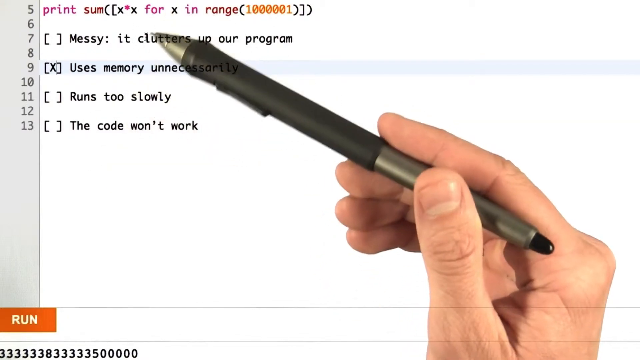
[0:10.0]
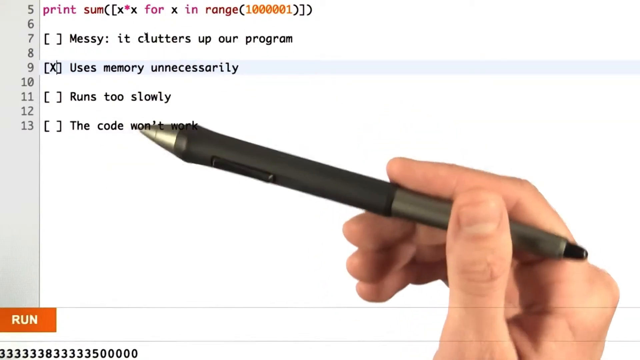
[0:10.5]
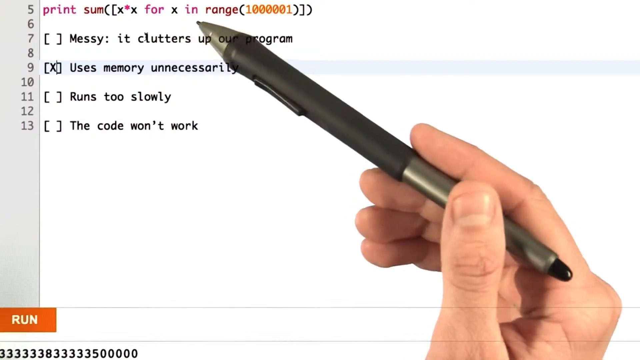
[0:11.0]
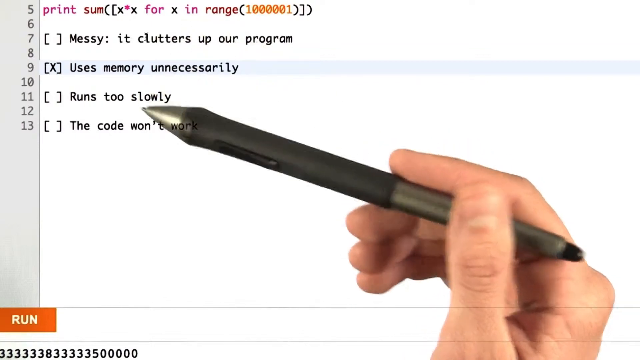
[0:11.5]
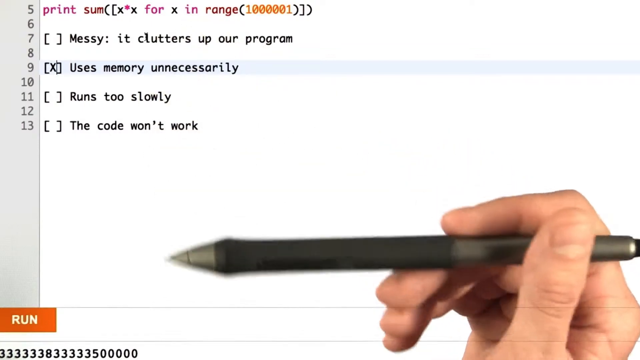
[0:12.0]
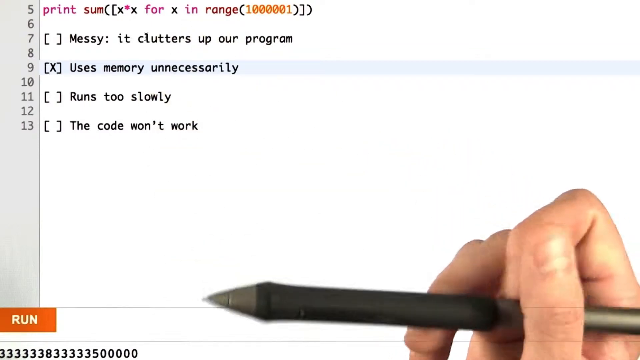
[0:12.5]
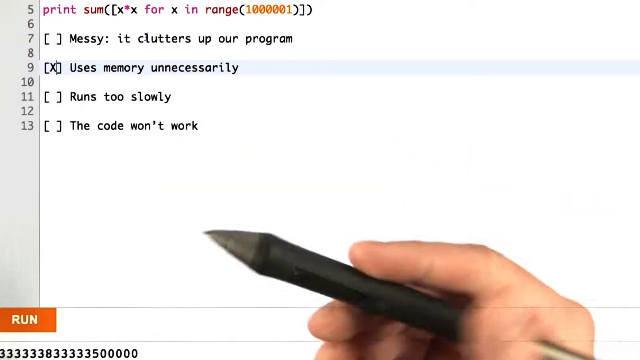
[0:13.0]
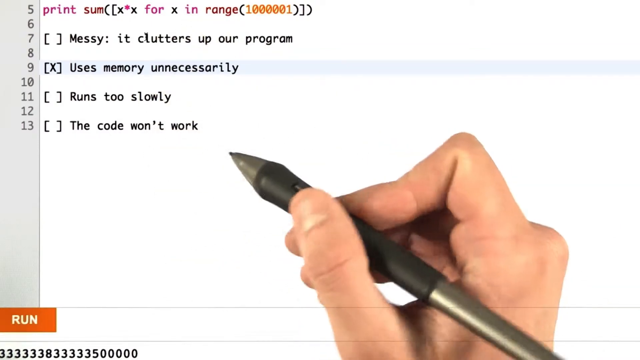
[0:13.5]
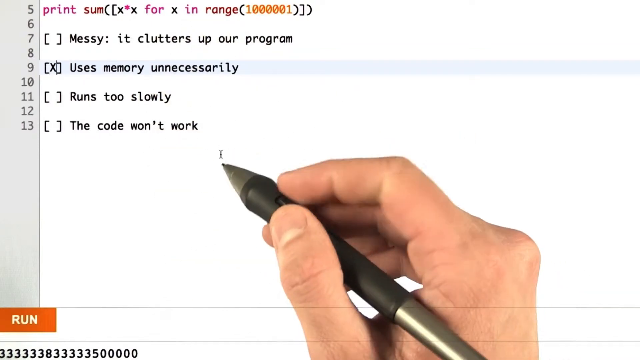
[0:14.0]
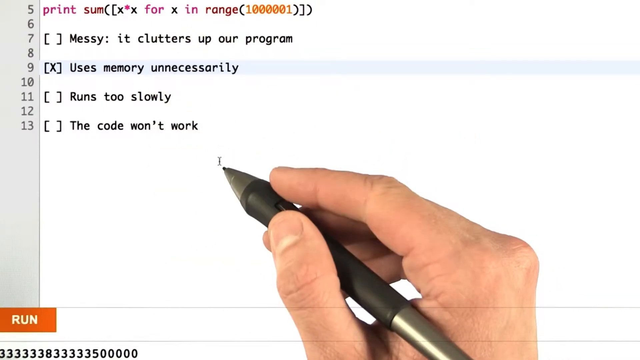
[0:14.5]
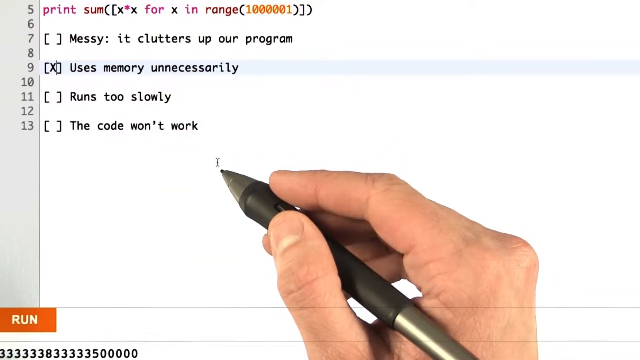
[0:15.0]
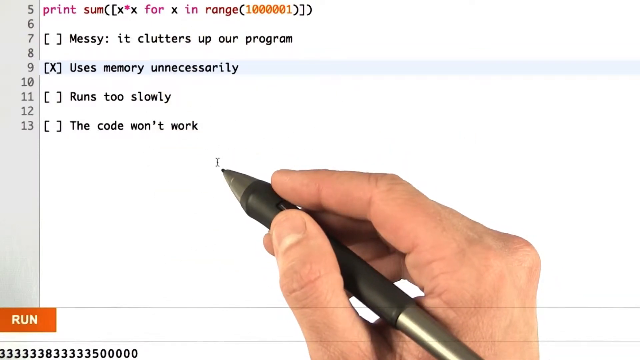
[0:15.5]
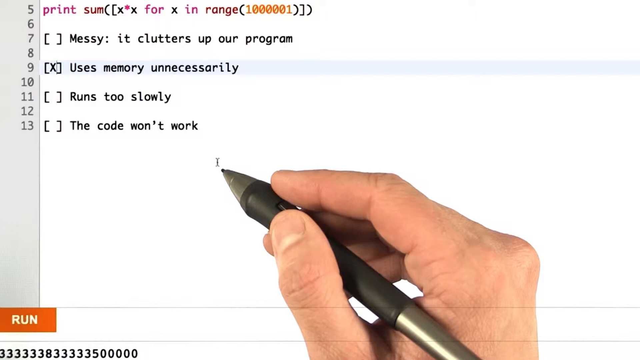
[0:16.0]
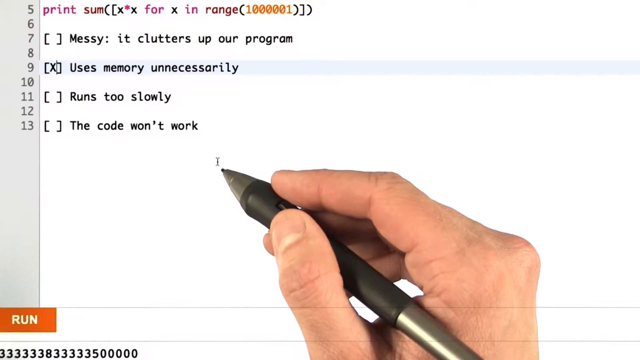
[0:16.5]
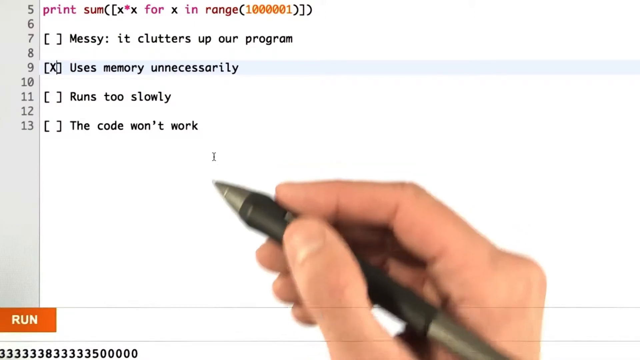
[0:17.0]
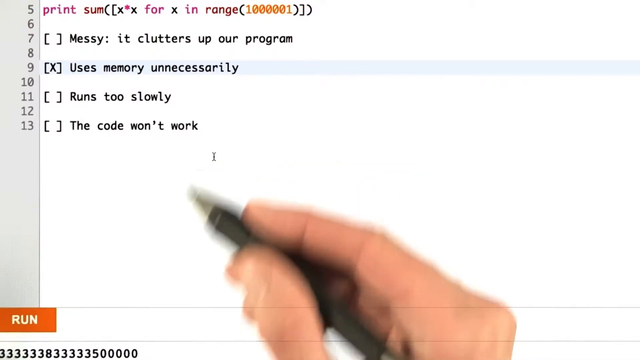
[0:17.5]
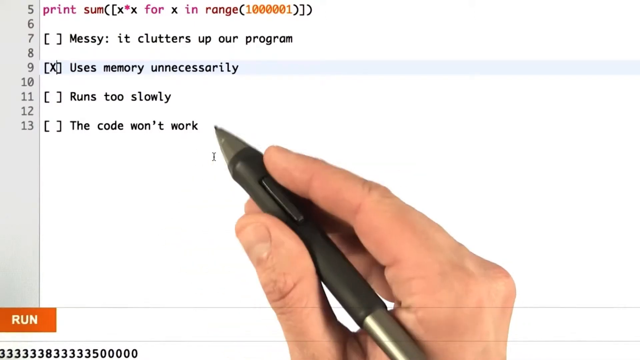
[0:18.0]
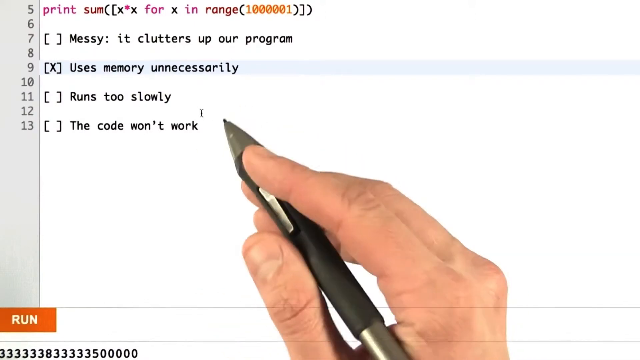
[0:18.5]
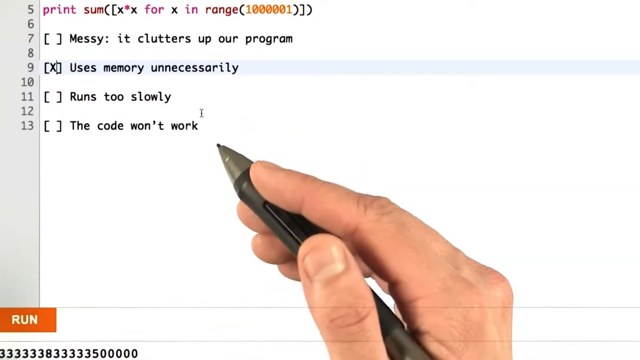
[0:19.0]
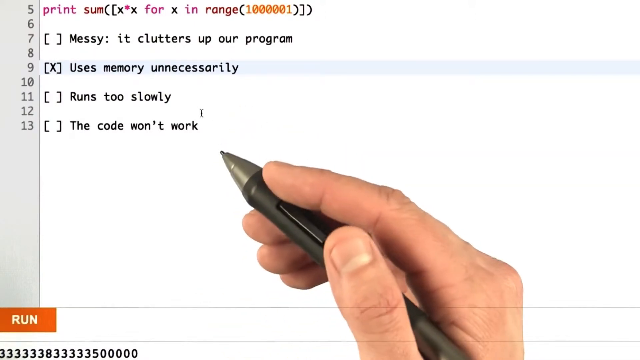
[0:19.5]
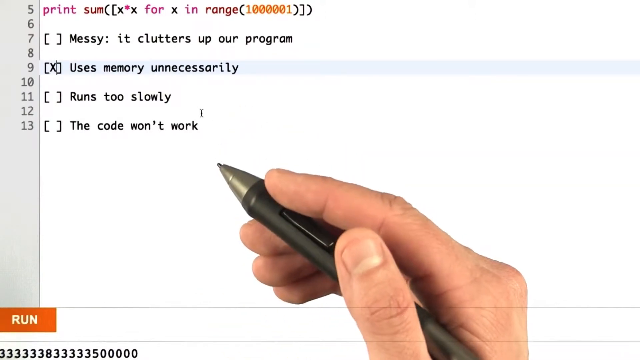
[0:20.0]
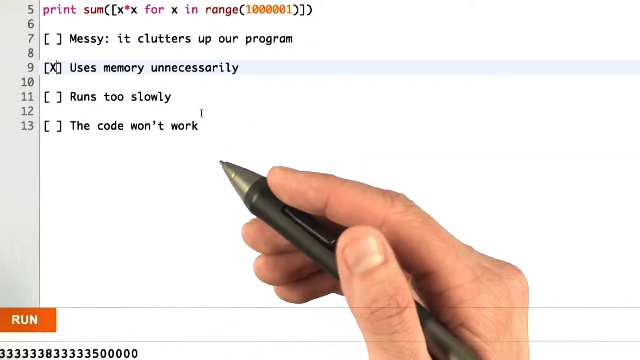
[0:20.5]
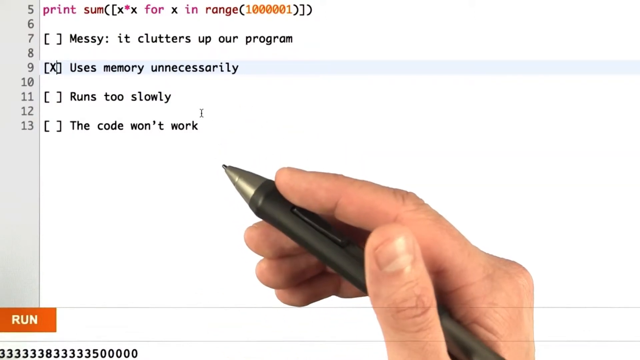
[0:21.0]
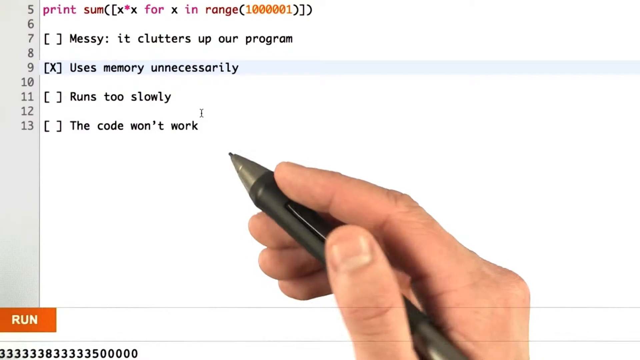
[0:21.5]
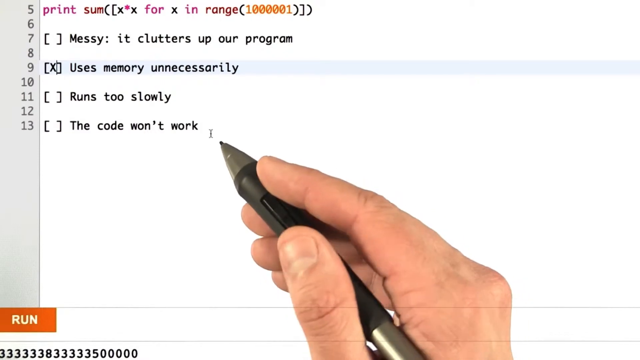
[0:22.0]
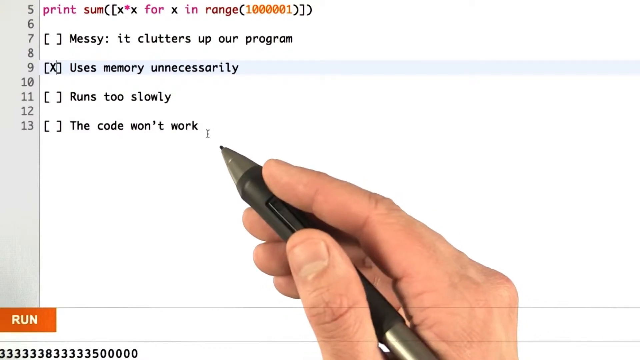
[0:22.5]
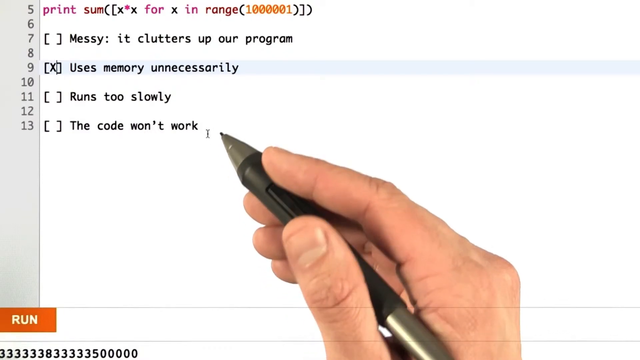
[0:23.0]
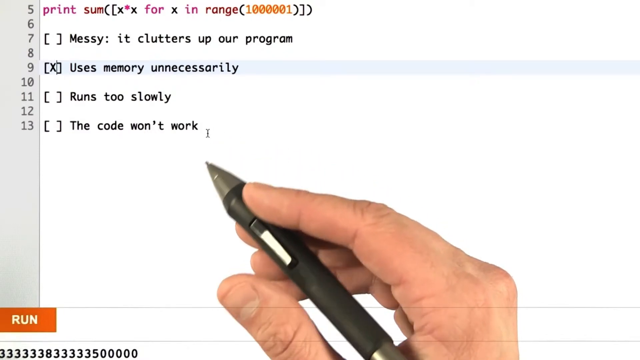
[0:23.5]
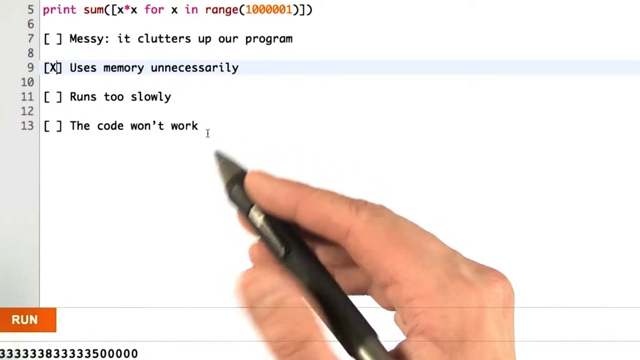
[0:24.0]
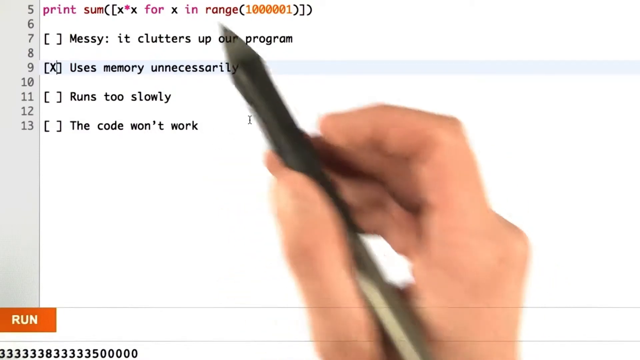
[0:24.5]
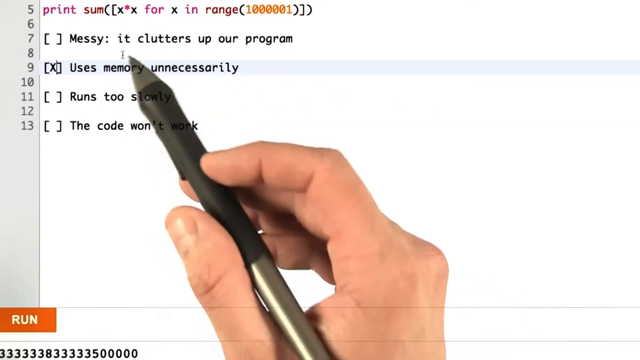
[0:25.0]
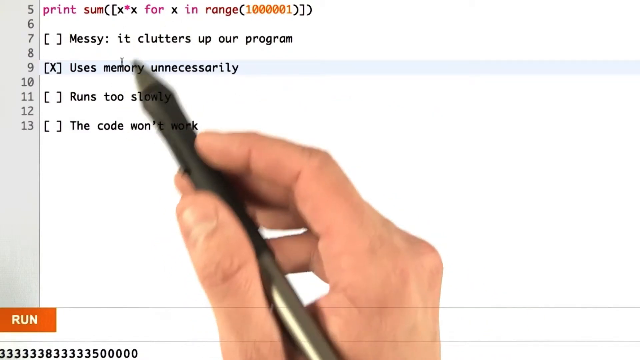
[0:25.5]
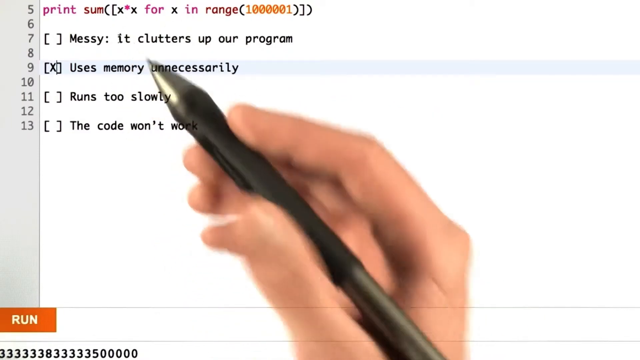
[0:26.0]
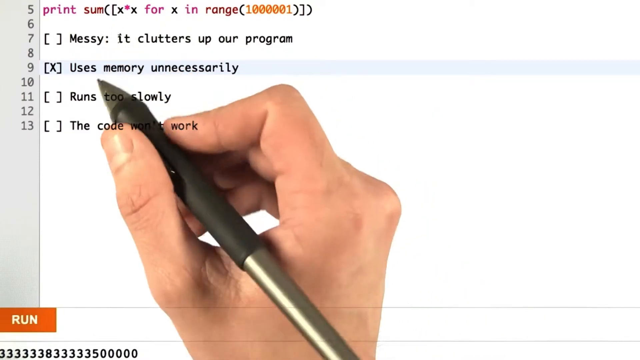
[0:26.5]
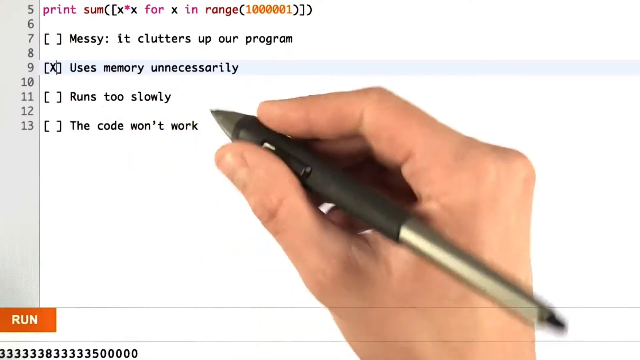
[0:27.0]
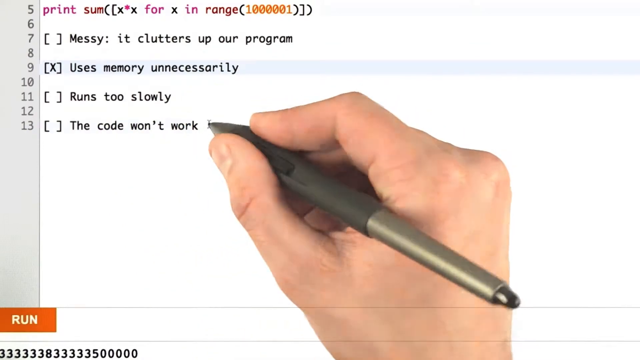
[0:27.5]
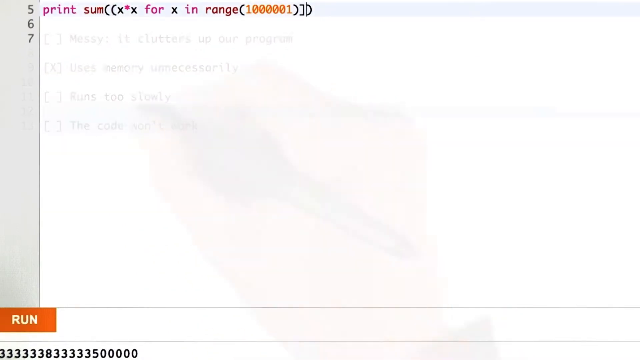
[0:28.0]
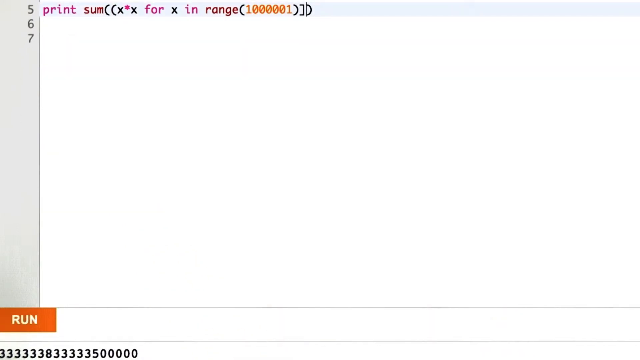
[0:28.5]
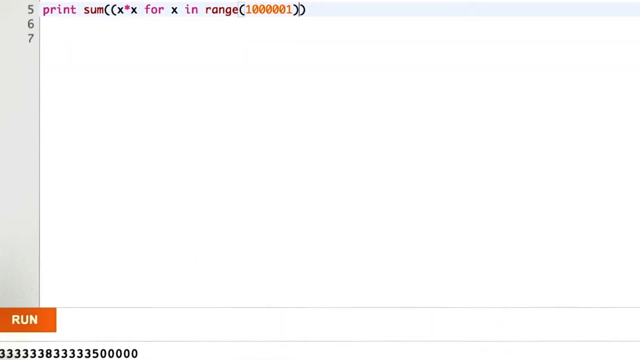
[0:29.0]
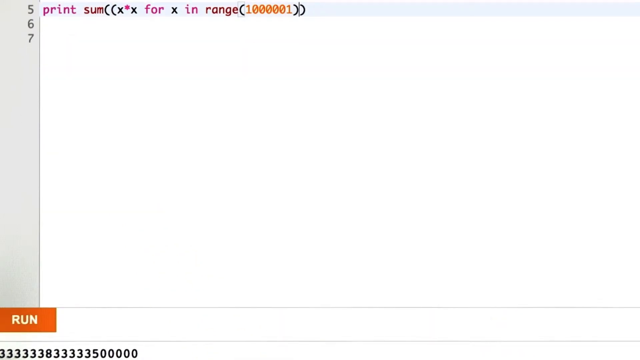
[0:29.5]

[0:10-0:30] The same projector screen is still in use. The man moves his hand around a little and waves the pen around the screen near the code at the top, then moves the pen down to the bottom, out of the way, so all of the code can be seen clearly. Briefly, the view flips back to the very top, where it says "print sum", and lines 7, 8, 9, 10, 11, 12 and 13 underneath are not showing yet.